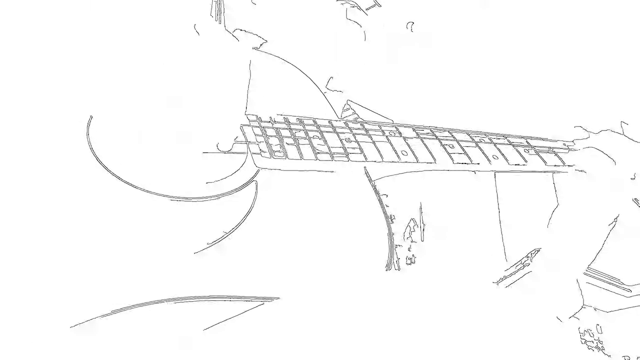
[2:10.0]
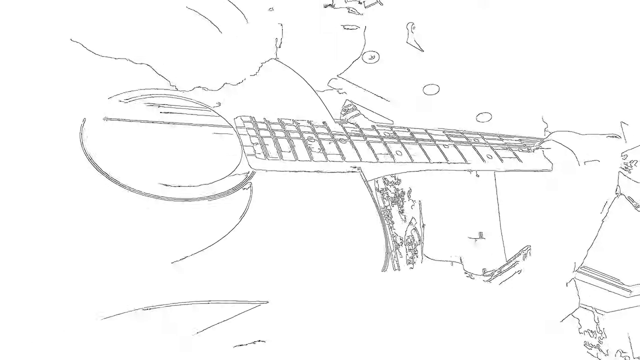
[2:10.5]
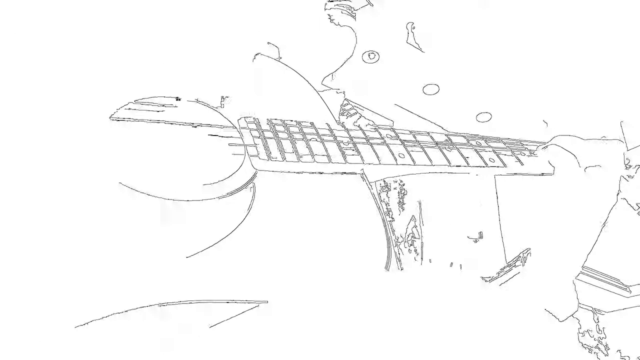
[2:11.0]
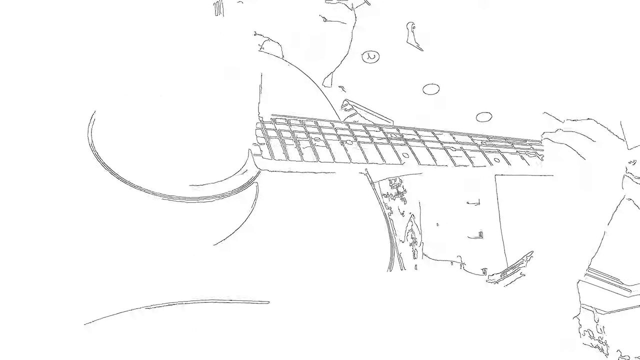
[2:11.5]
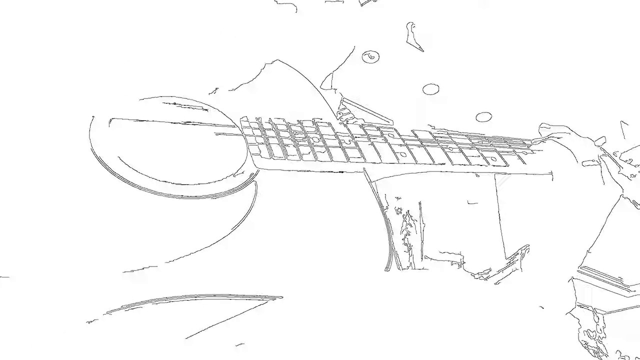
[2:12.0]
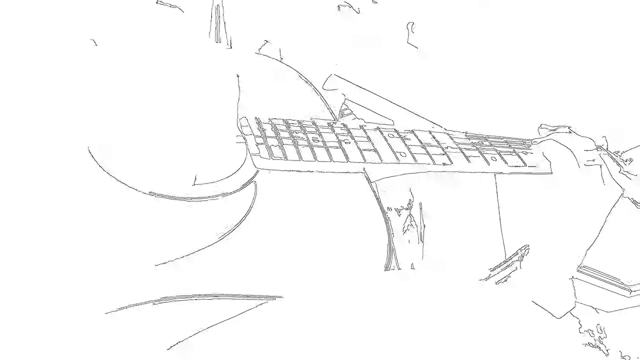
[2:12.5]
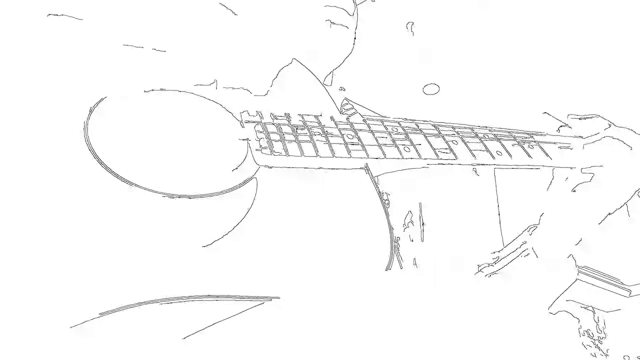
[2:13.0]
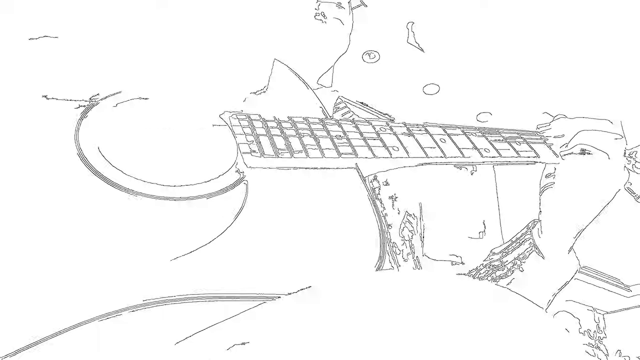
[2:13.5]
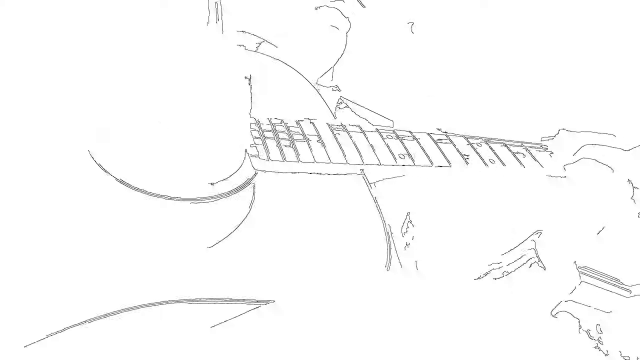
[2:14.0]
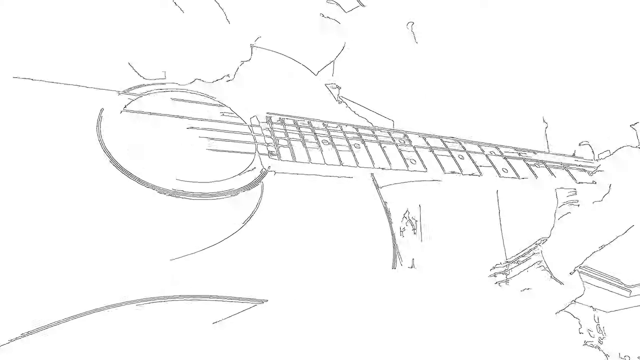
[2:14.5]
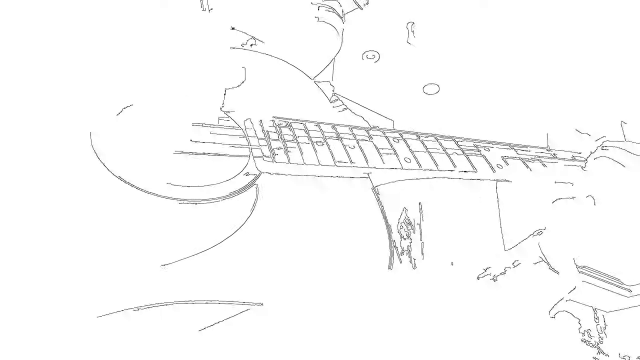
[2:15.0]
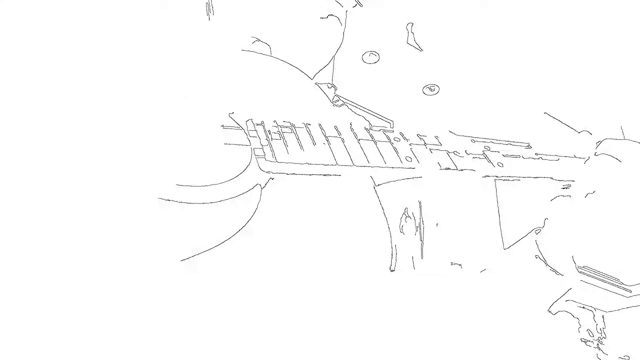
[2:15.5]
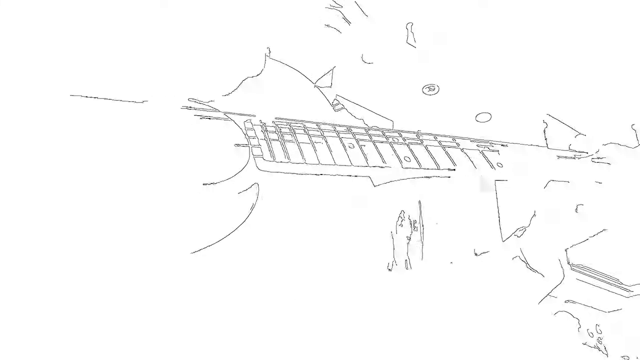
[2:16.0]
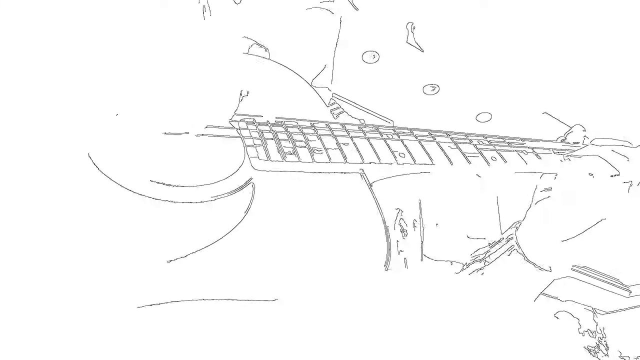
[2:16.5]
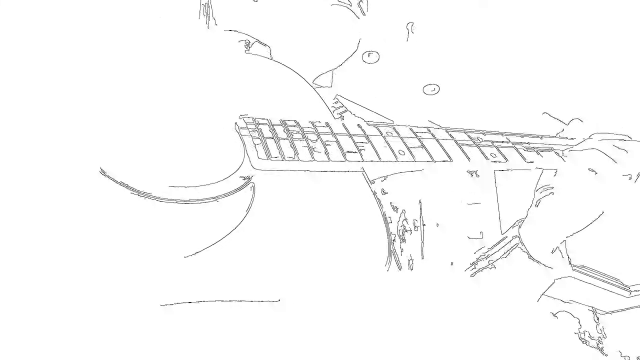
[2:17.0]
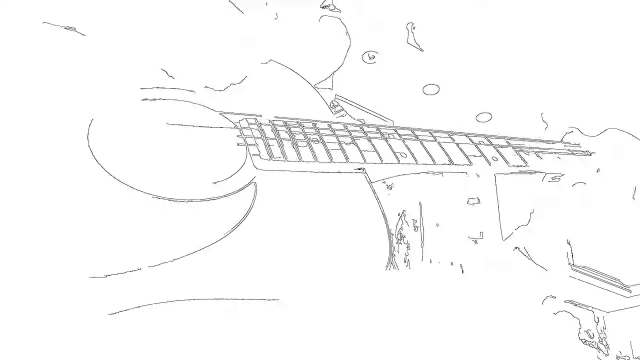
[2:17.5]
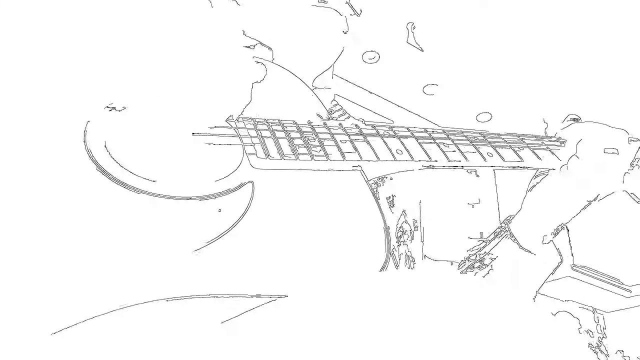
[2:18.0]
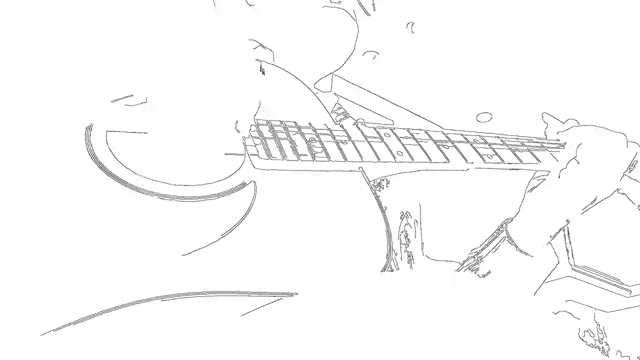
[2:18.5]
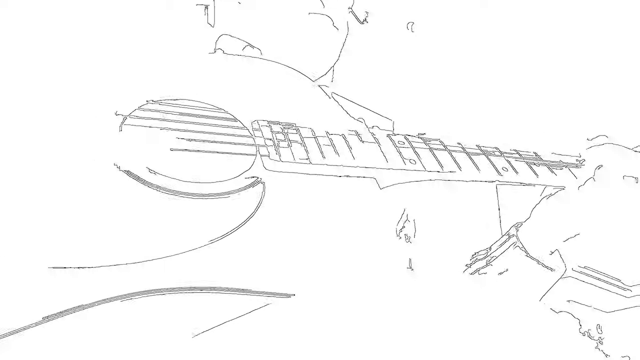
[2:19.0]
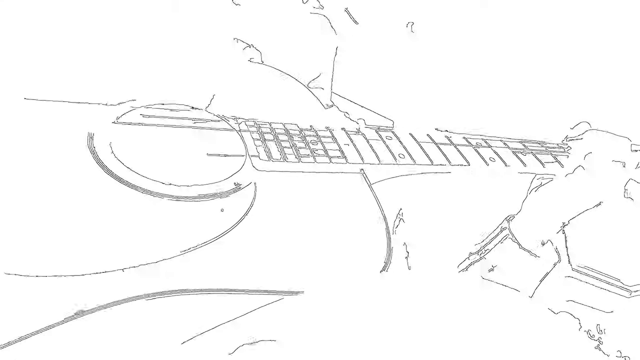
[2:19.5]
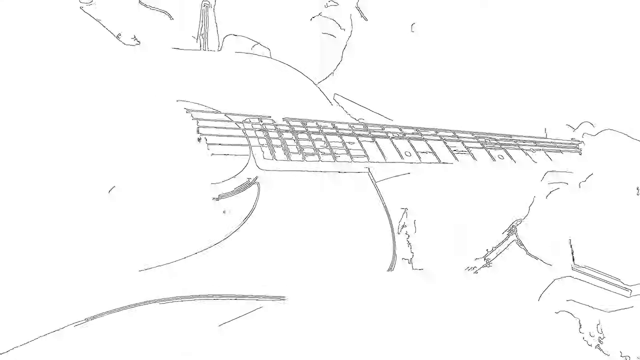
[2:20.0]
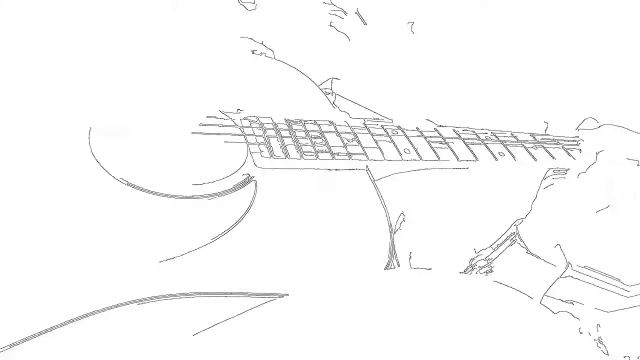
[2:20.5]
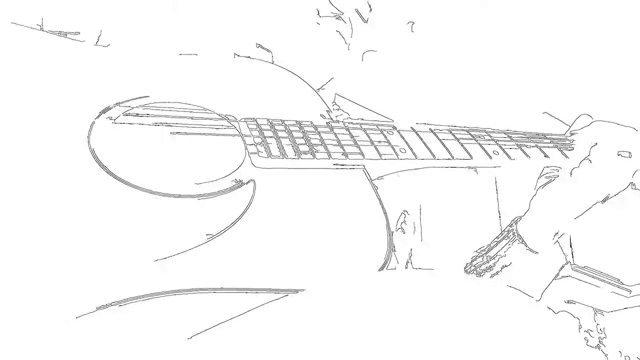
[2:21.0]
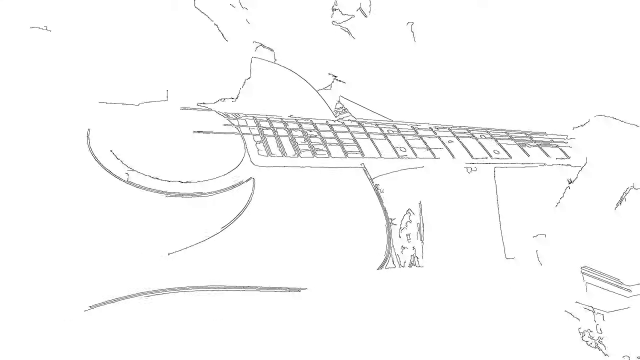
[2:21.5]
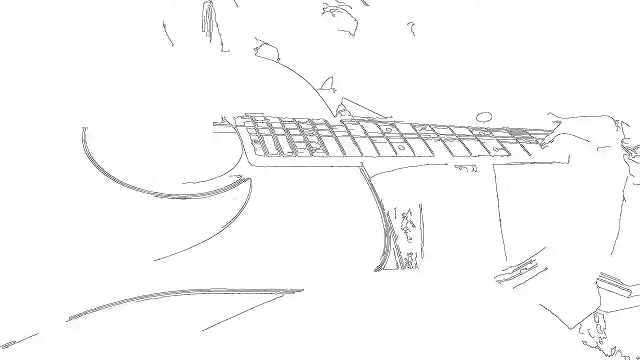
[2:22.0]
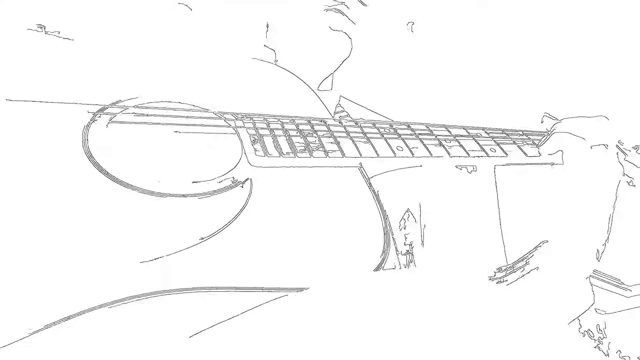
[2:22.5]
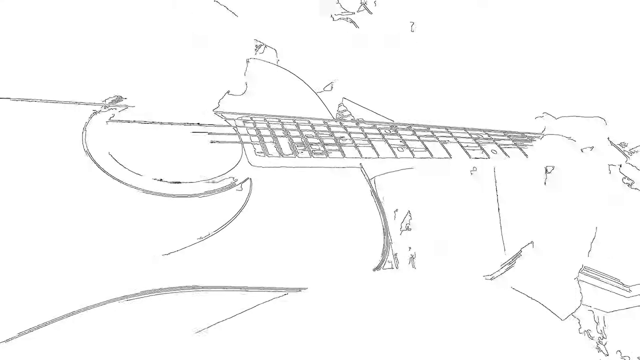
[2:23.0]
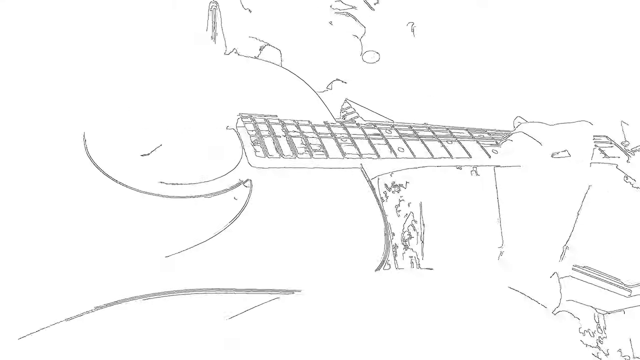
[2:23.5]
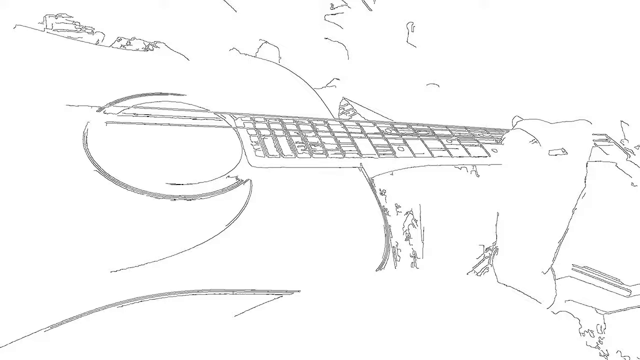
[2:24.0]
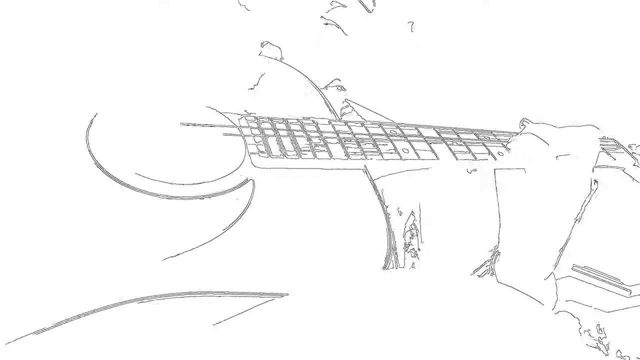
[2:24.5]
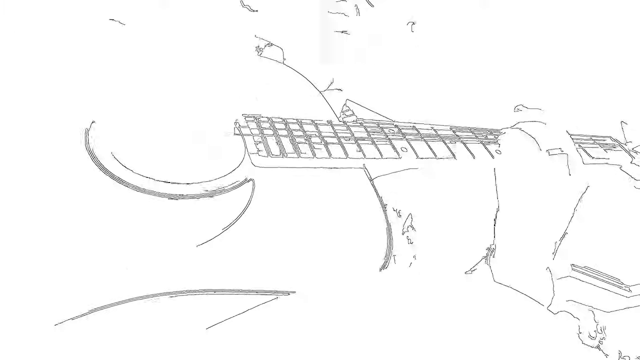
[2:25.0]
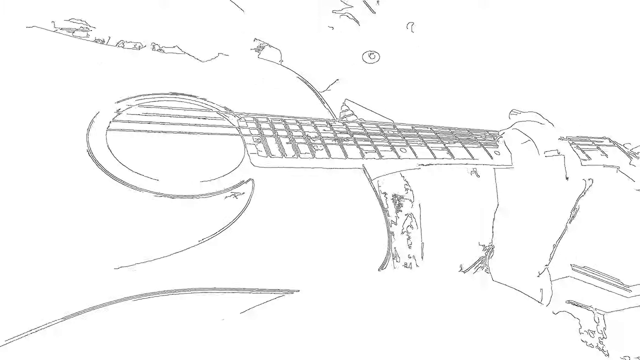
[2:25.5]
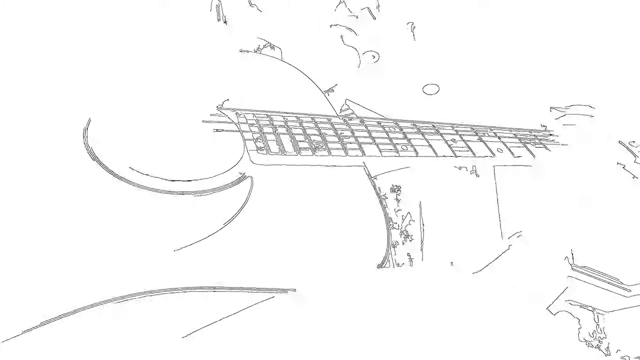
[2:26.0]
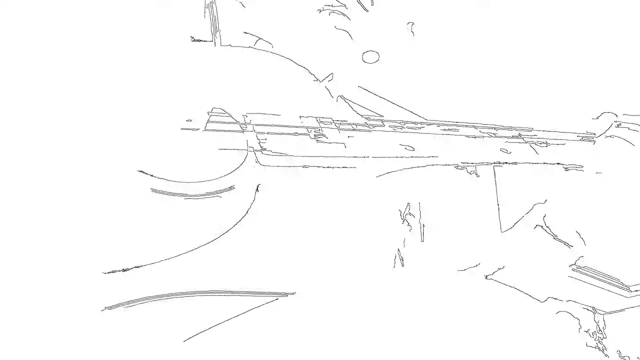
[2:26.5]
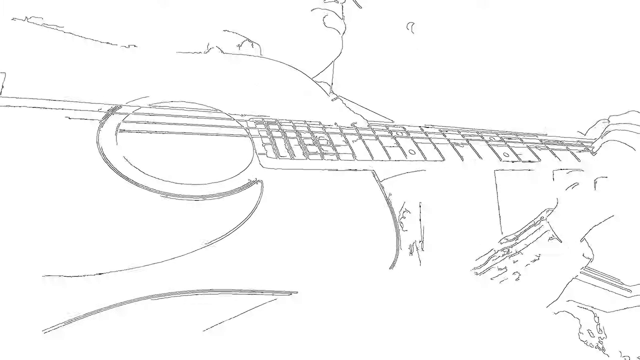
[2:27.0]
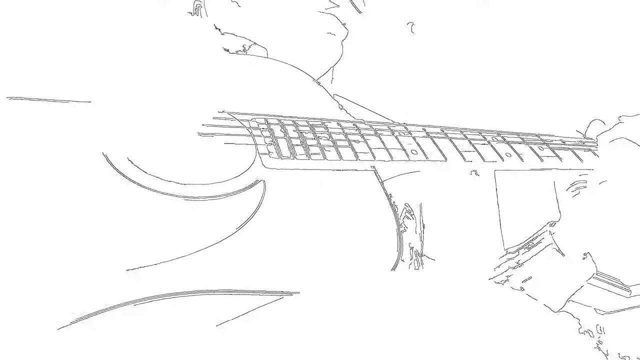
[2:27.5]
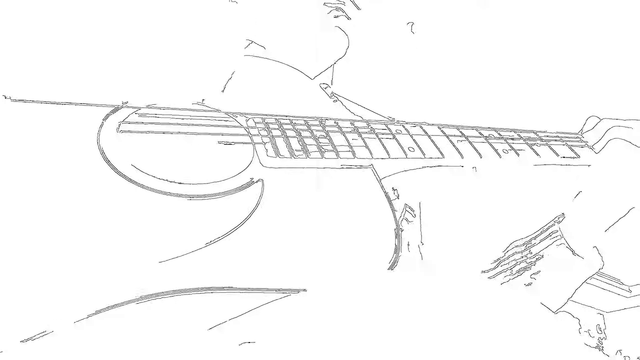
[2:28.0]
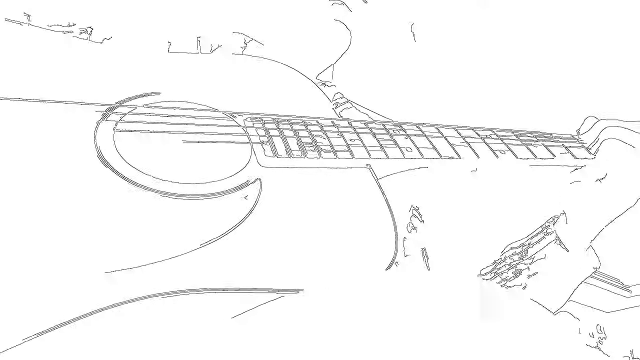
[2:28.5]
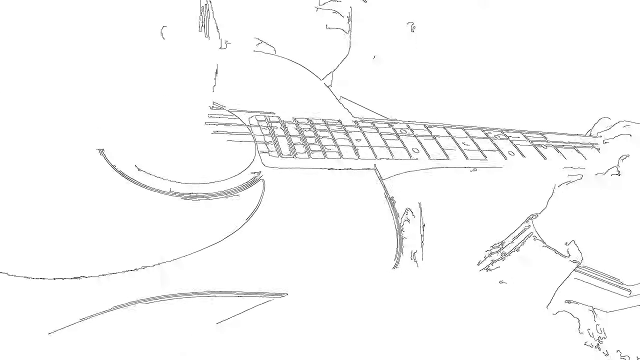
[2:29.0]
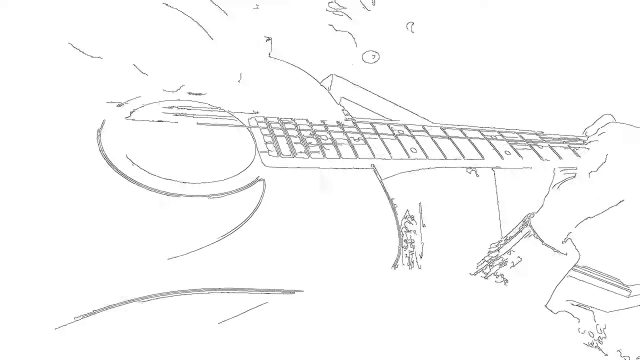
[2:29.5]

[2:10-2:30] The man now plays a bit more slowly and sings at a slower pace, as though he has reached a slower-tempo portion of the song. He sort of leans back, bringing more of his mouth into frame. He sings straight across, as though looking at lyrics or singing into a microphone just out of the camera's range. Behind him is what looks like an open-concept kitchen with multiple cabinets and other installed cabinetry, and a counter with items on it. He wears what looks like a collared shirt with a cardigan or zip-up sweater, and what looks like a wedding band on his left hand. His longer fingernails are visible as he strums. The lower half of his face moves in and out of frame as he leans back at times, as though readjusting himself and the guitar in his lap. He wears no strap, holding the guitar freely in his lap.